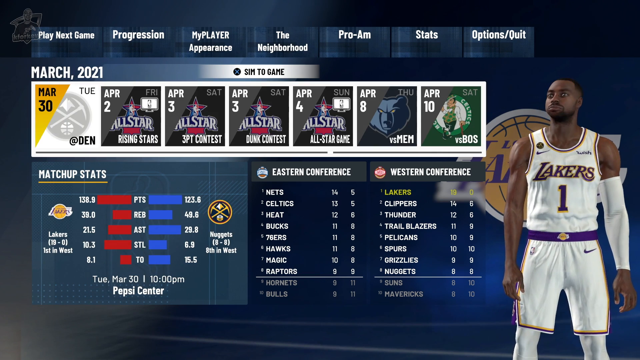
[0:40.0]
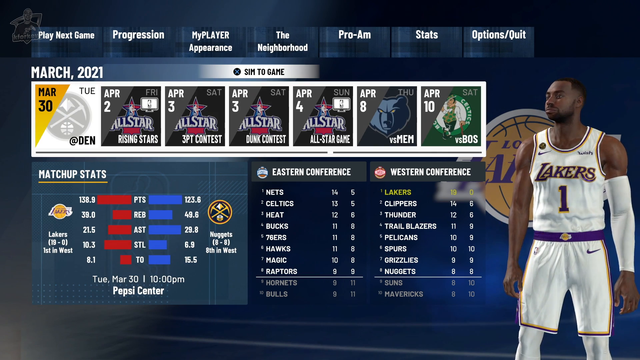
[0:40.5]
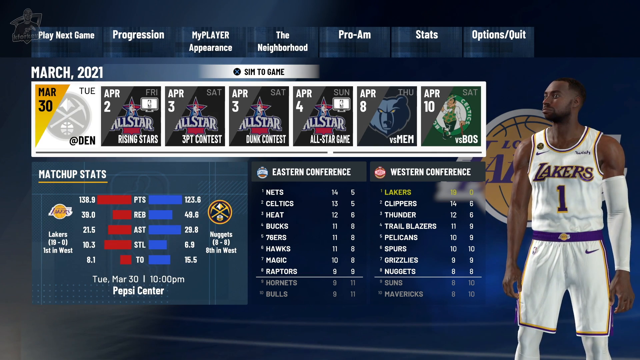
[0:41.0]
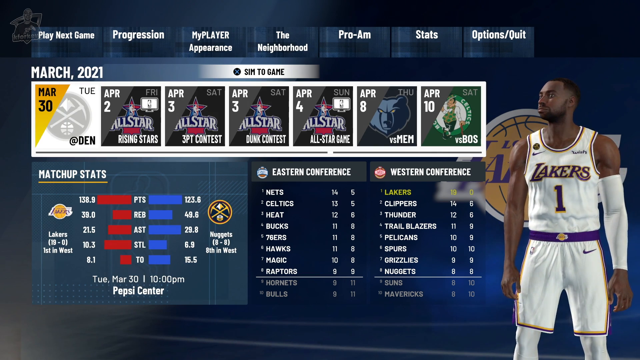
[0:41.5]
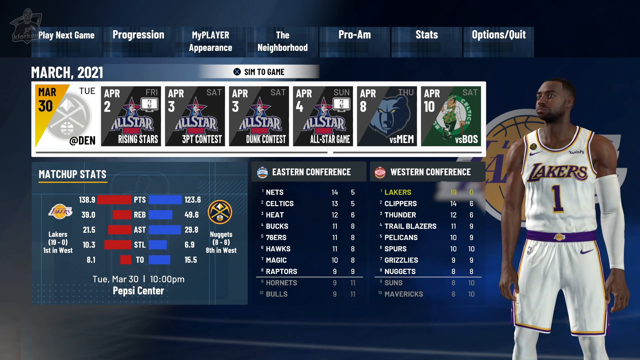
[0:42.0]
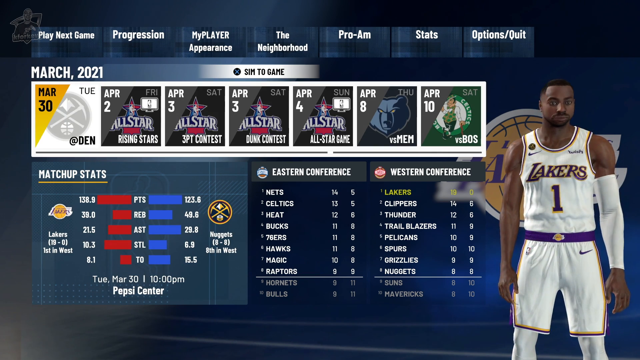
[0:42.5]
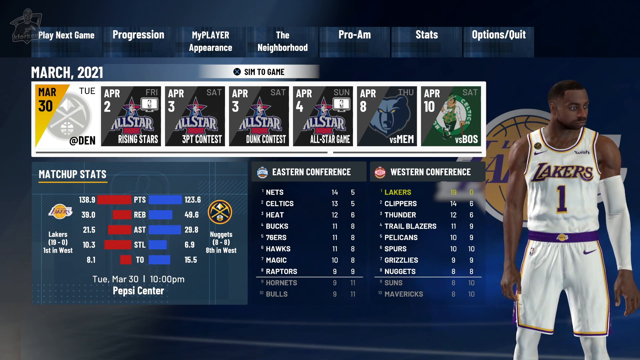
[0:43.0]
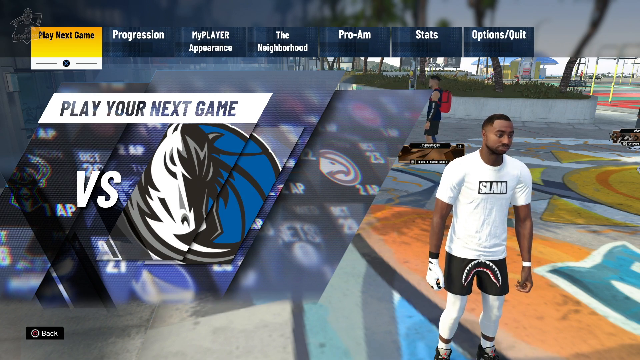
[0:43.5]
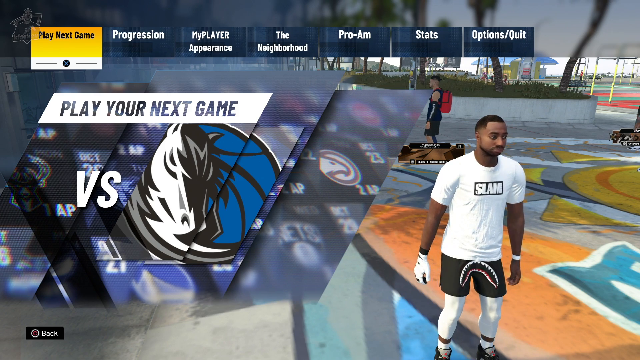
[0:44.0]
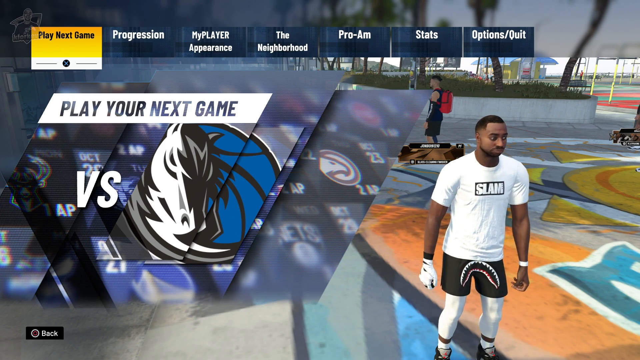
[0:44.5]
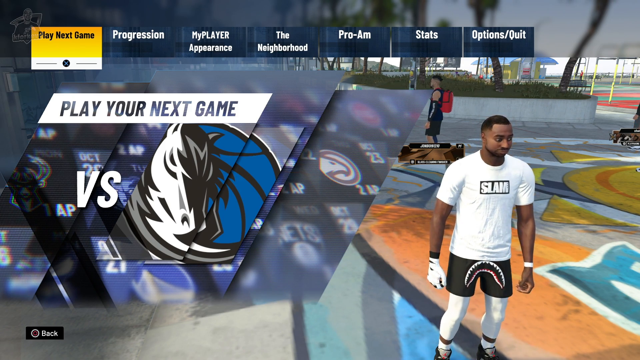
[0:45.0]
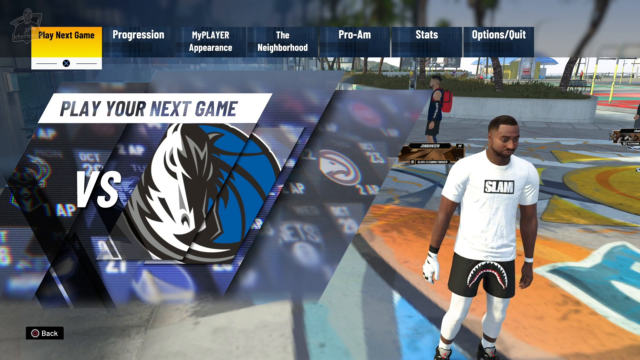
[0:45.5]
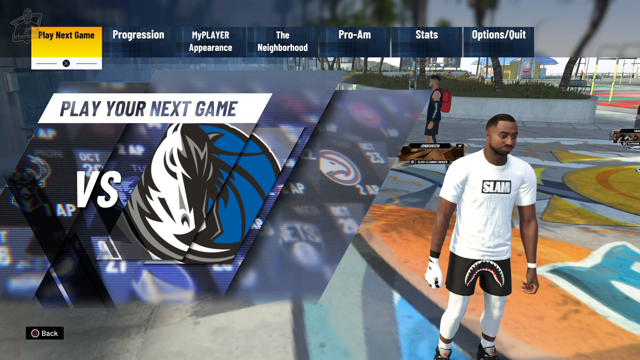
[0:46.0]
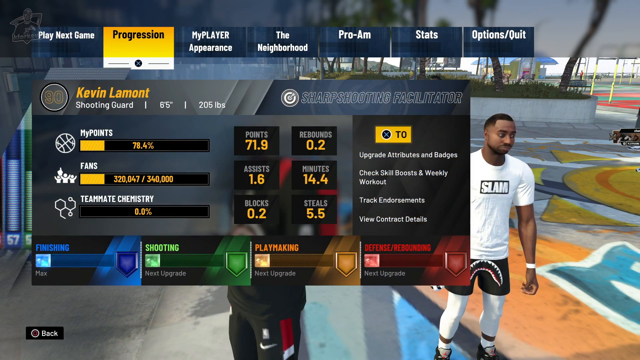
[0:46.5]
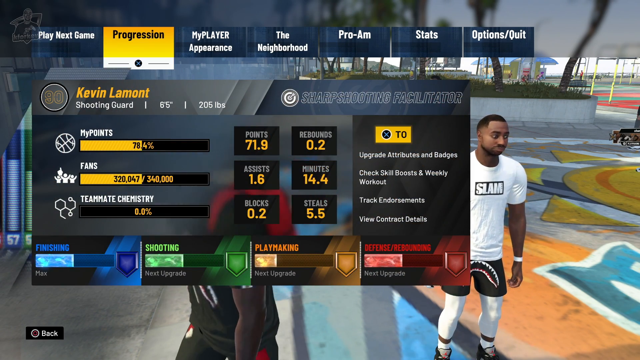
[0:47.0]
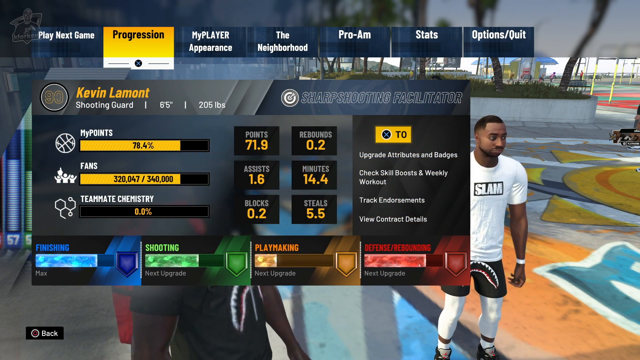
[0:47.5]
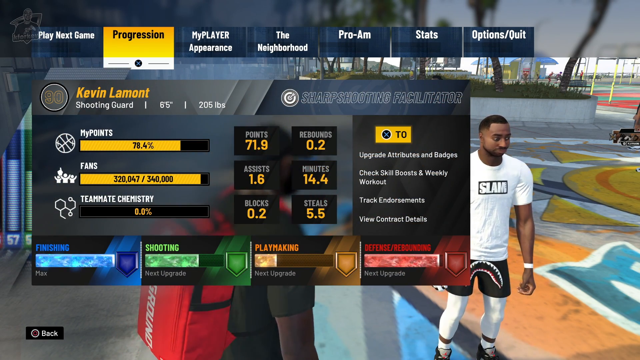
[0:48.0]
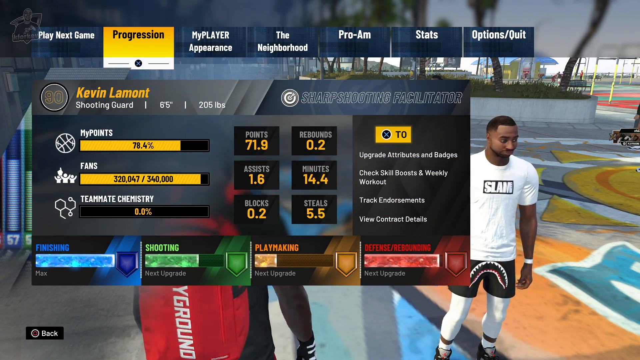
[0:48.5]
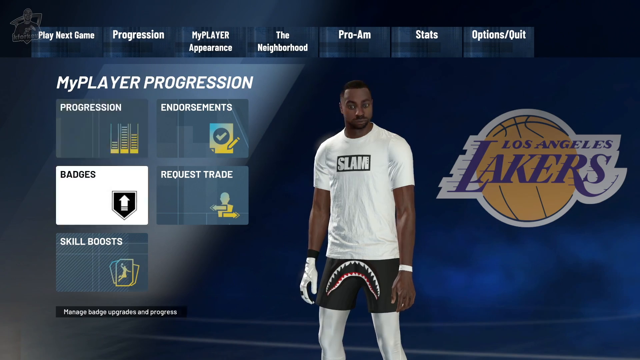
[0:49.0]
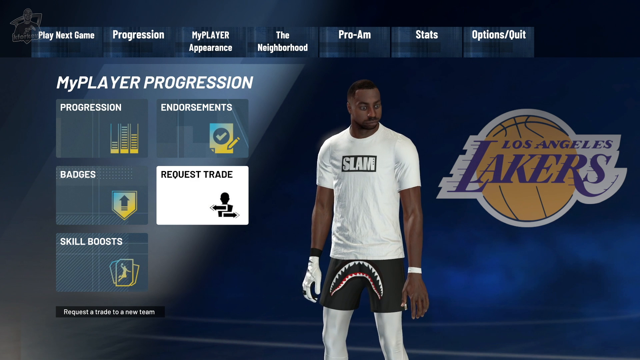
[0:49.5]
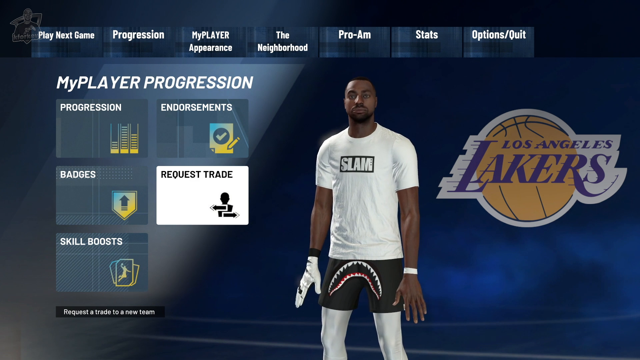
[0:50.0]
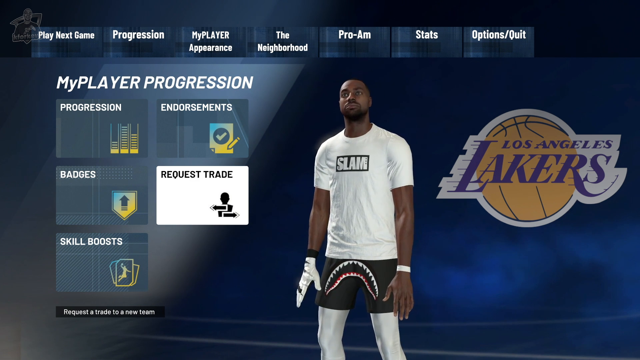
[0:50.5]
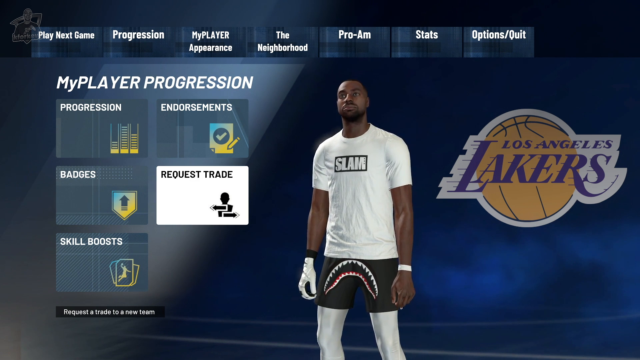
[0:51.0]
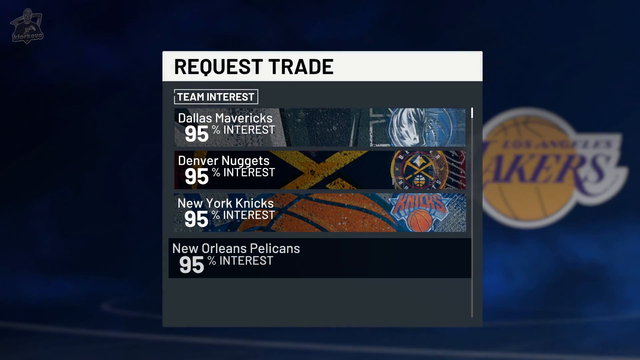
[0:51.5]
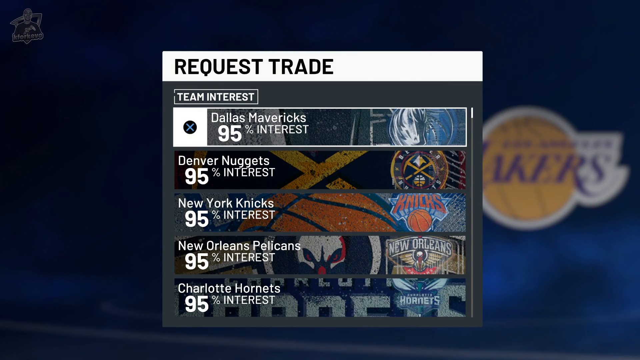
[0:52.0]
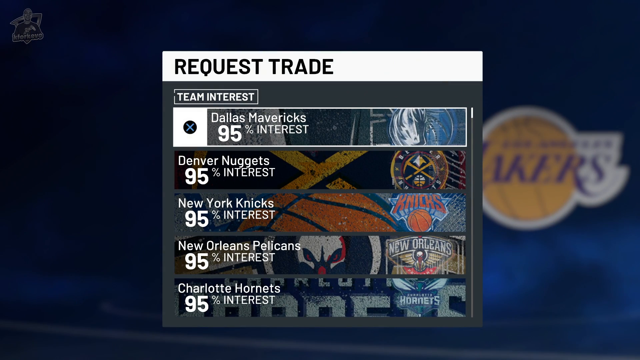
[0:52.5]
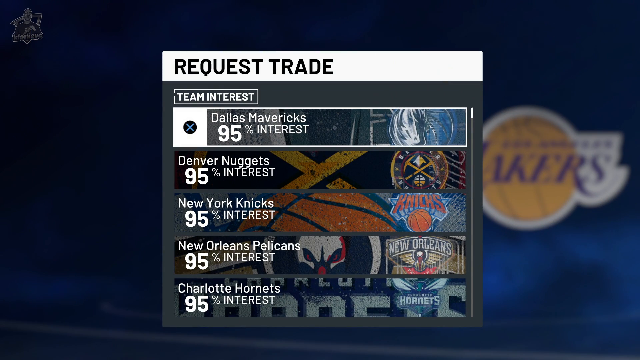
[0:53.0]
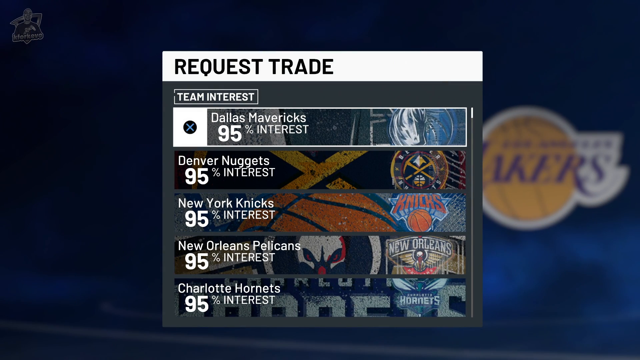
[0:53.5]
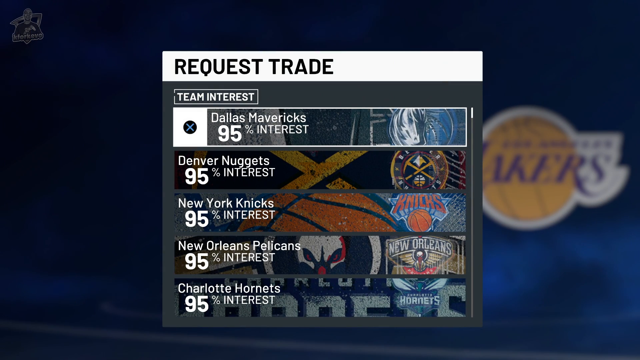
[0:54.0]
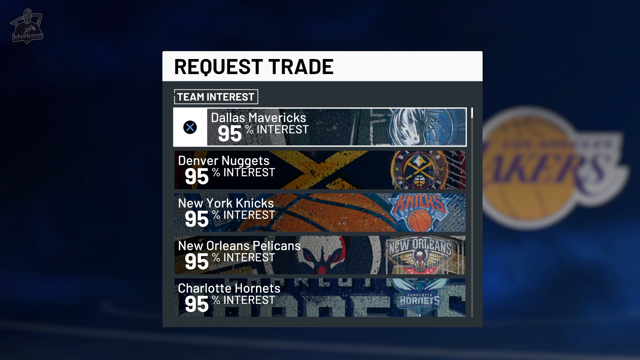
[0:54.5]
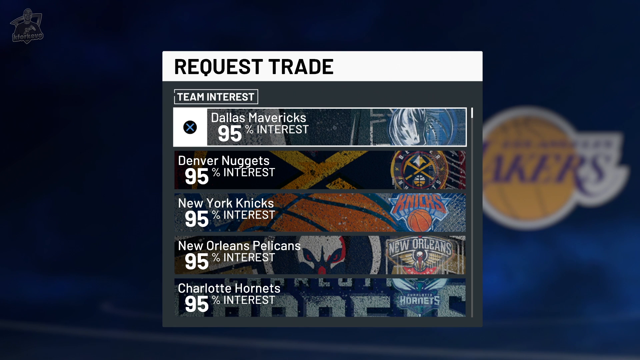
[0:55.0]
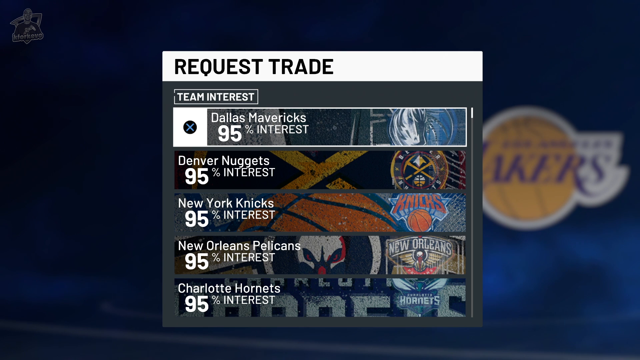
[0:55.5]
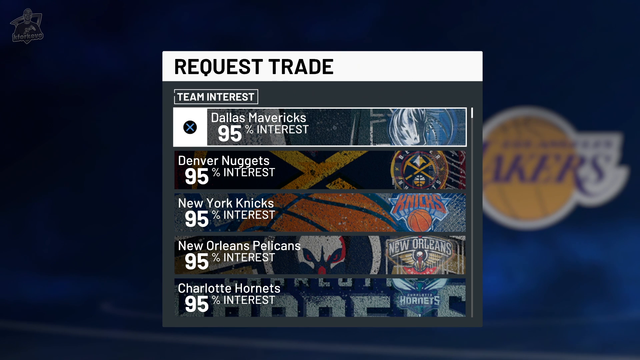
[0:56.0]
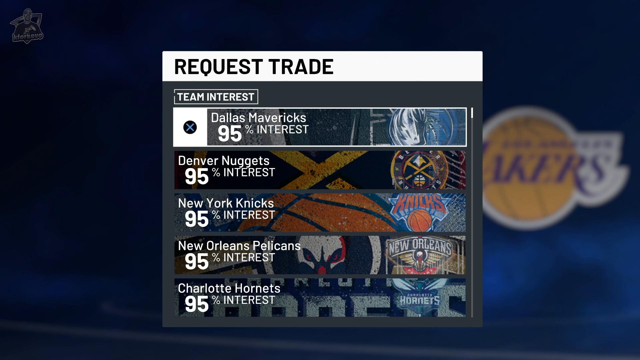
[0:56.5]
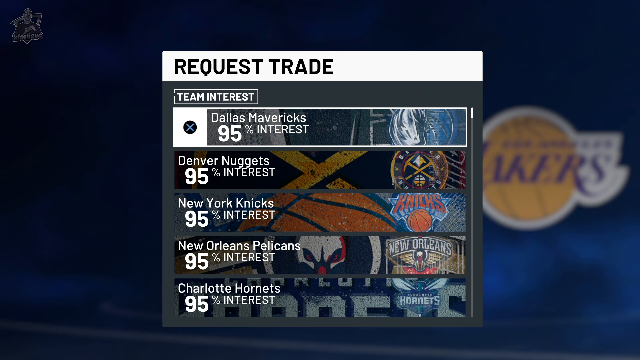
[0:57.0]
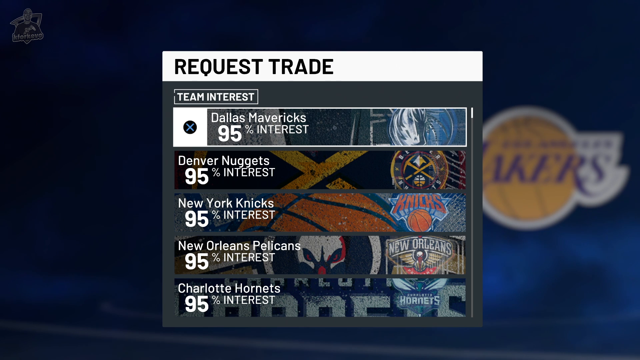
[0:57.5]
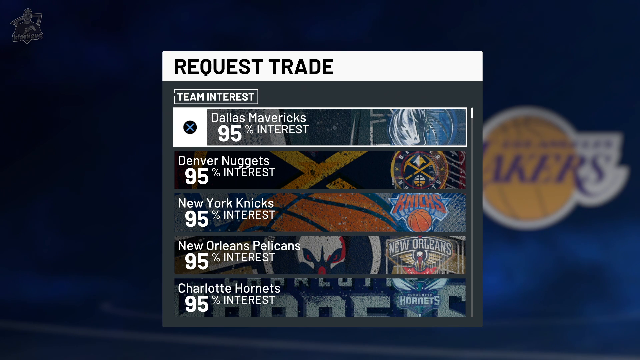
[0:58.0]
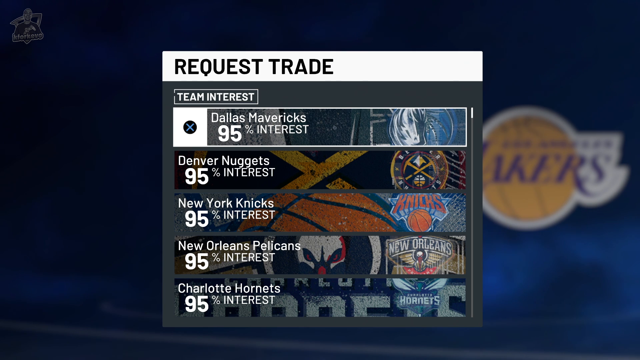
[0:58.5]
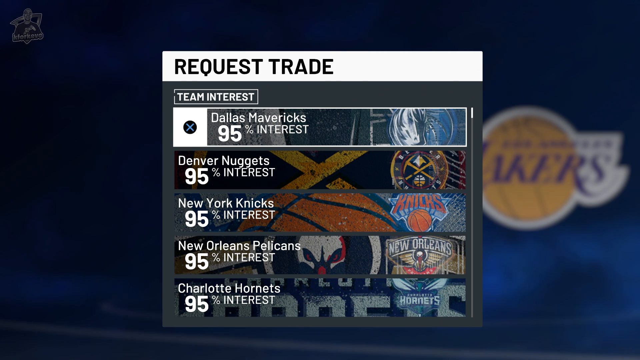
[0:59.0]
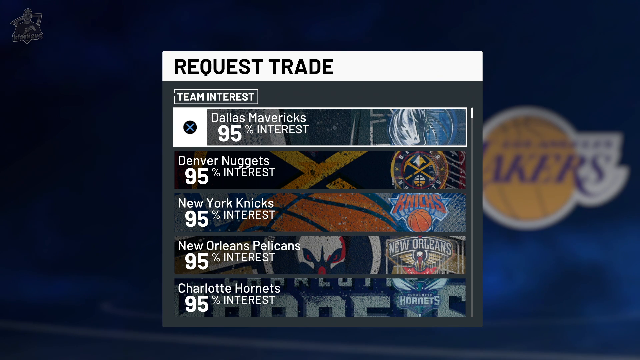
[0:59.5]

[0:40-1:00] The video appears to scroll through a menu in an NBA game. Across the top are what look like options, tabs or headers in white text on blue rectangles, reading "Play Next Game", "Progression", "My Player Appearance", "The Neighborhood", "Pro Am", "Stats" and "Options/Quit". Below them, at the top left, is the date "March 2021" in white, and below that is what looks like a horizontal scroll bar of small squares, each with a date at the top left and the opponent at the bottom right: March 30th at Denver in the leftmost square, then April 2nd All-Star, April 3rd All-Star, April 3rd All-Star, April 4th All-Star, April 8th versus Memphis and April 10th versus Boston. Below the scroll bar, at the bottom, there appear to be Matchup Stats, Eastern Conference Standings and Western Conference Standings. On the right side is a picture of the player avatar, apparently a black man wearing a white Lakers jersey with the purple word "Lakers" across the chest and the number one. The view then leaves this menu for the main menu, where Play Next Game is highlighted in yellow; the selection moves right to the Progression tab, which is highlighted and clicked. A new screen reads "My Player Progression" with five buttons on the left: Progression, Endorsements, Badges, Request Trade and Skill Boost. Progression is initially selected, shown in white; the selection moves down to Badges, which turns white, then to Request Trade, which turns white and is clicked. A Request Trade pop-up appears showing team interest, with five teams in red; it appears to be on a scroll bar, so there are more. The list reads Dallas Mavericks 95% at the top, then Denver Nuggets 95%, New York Knicks 95%, New Orleans Pelicans 95% and Charlotte Hornets 95%.